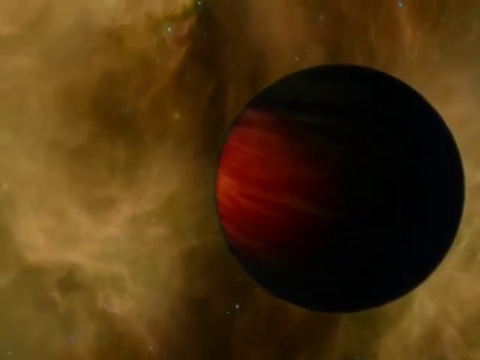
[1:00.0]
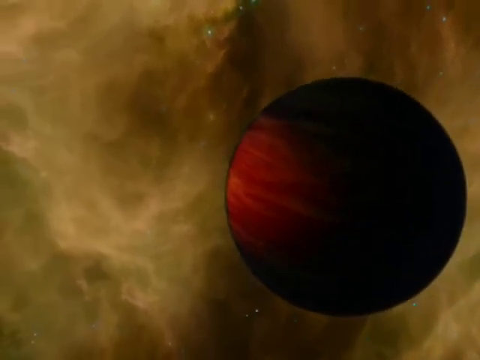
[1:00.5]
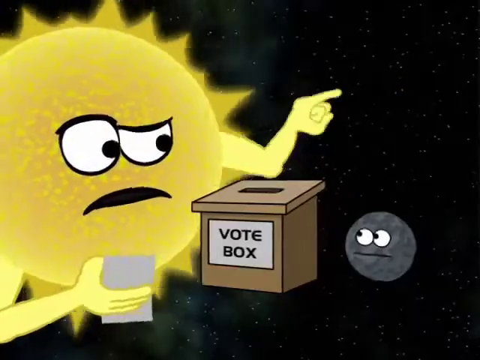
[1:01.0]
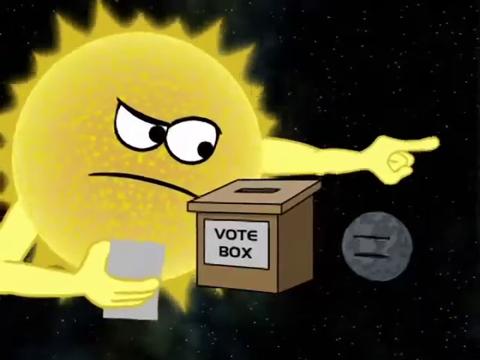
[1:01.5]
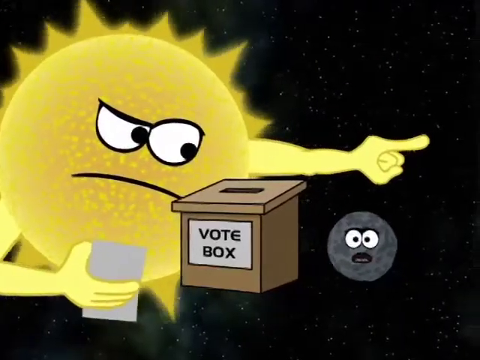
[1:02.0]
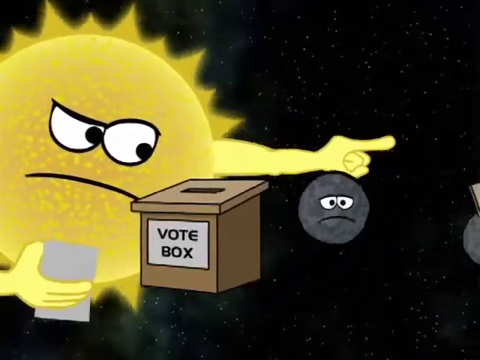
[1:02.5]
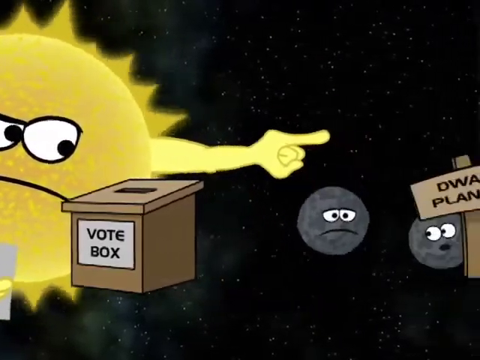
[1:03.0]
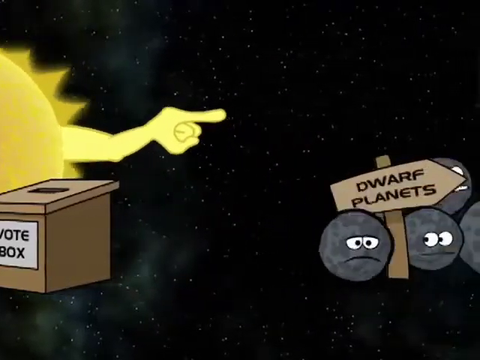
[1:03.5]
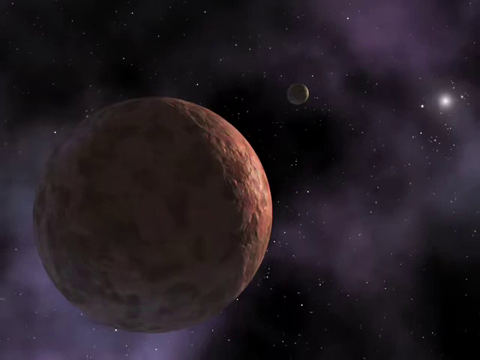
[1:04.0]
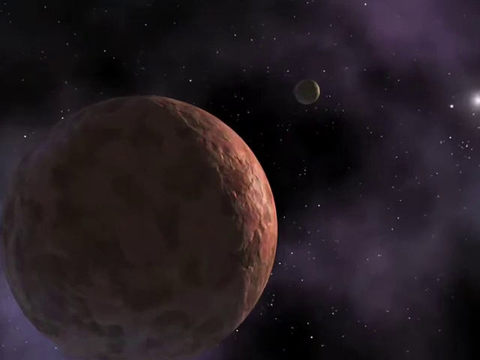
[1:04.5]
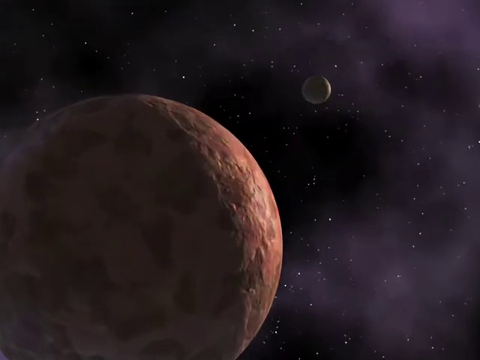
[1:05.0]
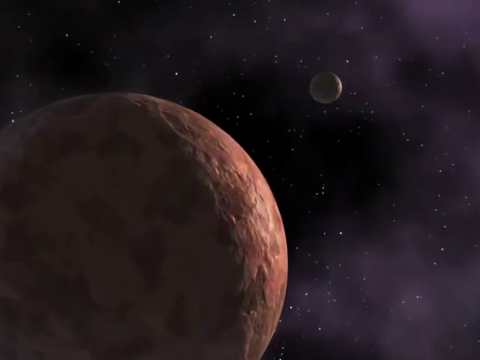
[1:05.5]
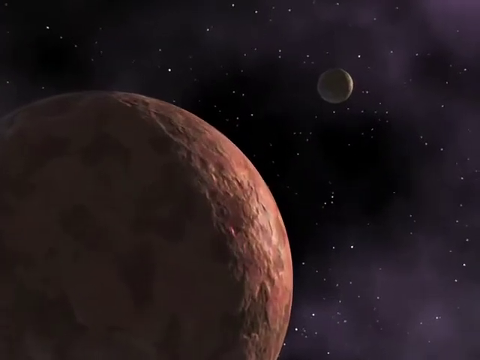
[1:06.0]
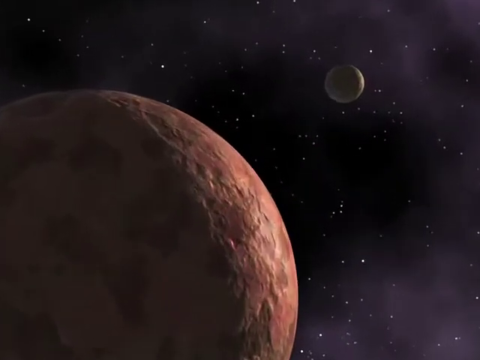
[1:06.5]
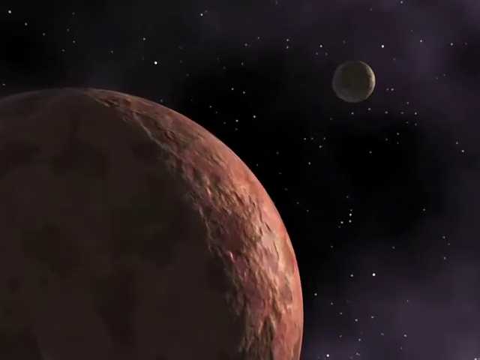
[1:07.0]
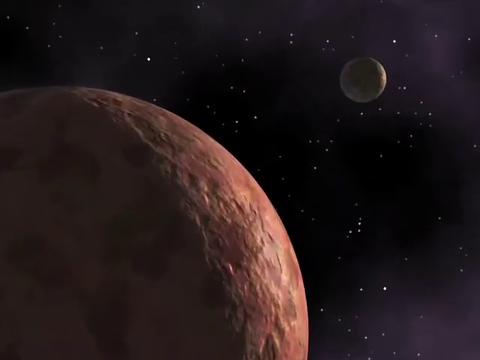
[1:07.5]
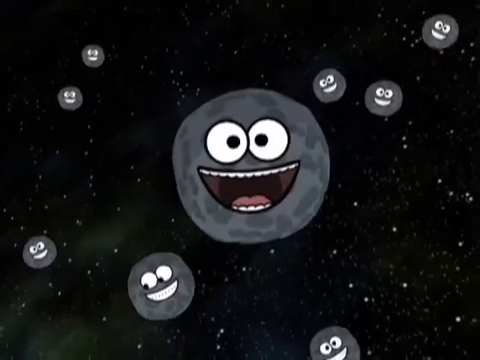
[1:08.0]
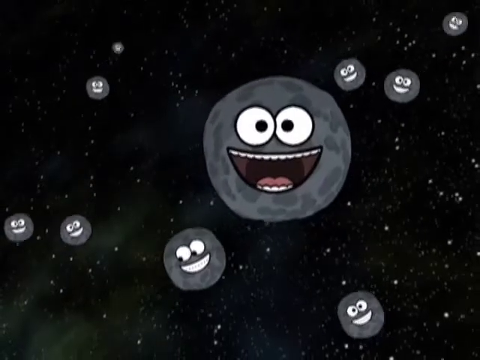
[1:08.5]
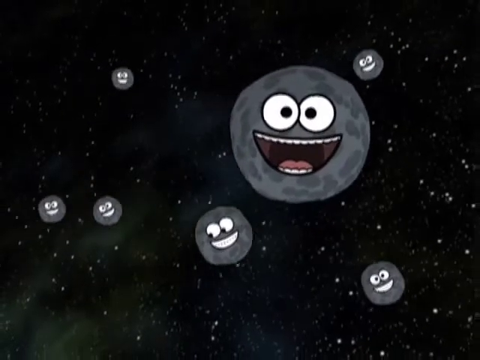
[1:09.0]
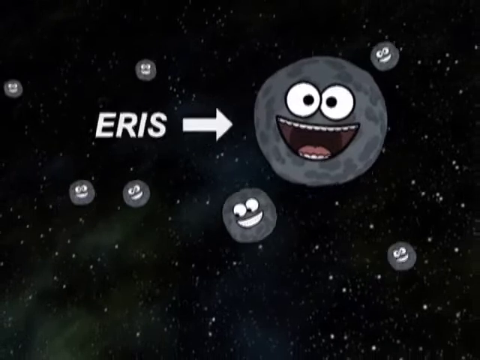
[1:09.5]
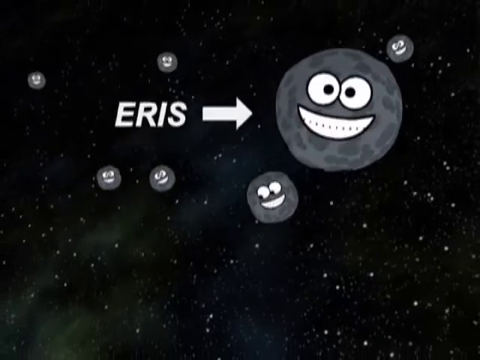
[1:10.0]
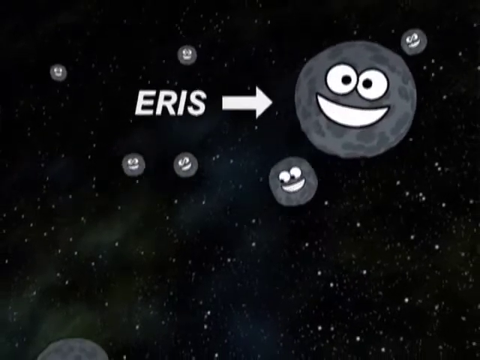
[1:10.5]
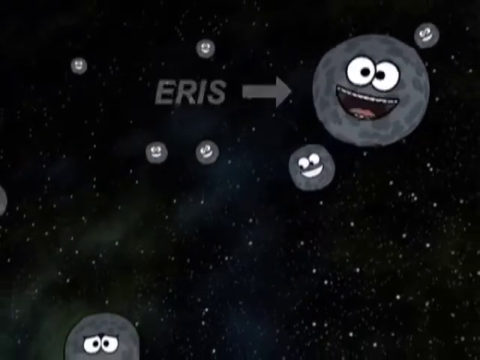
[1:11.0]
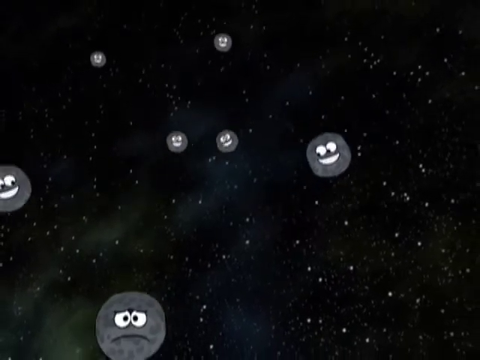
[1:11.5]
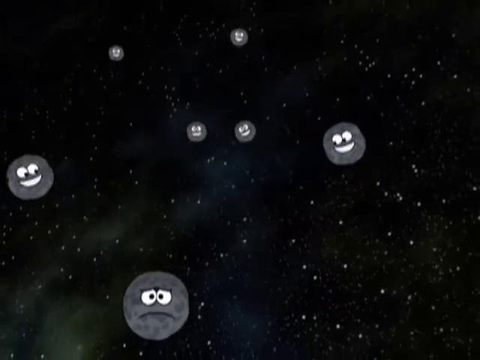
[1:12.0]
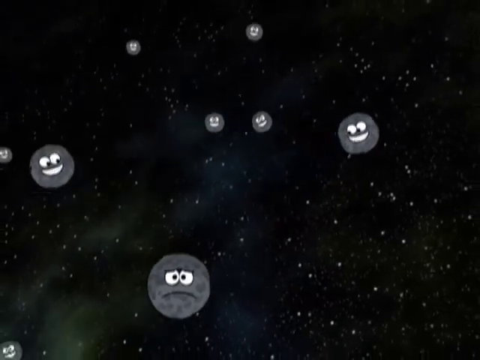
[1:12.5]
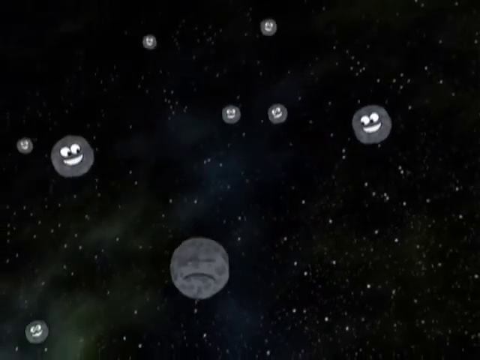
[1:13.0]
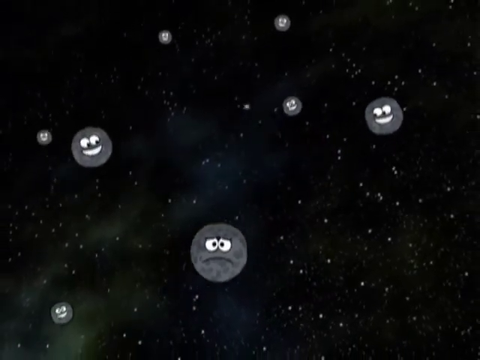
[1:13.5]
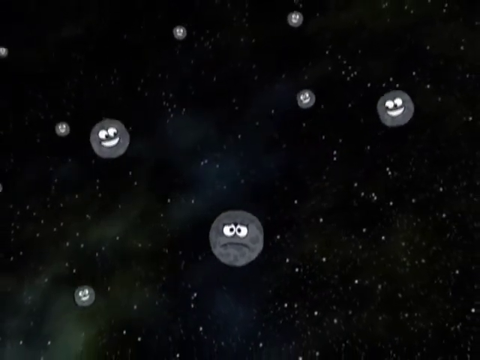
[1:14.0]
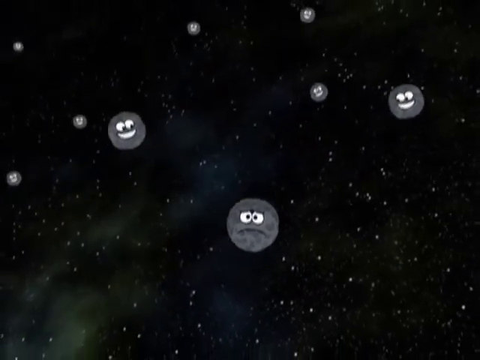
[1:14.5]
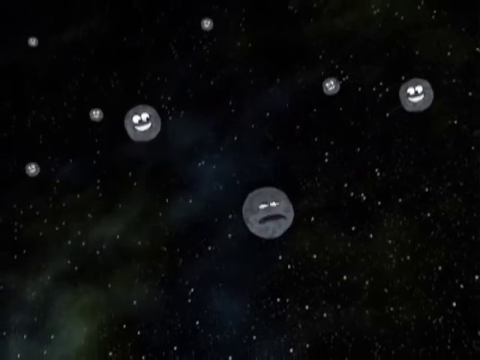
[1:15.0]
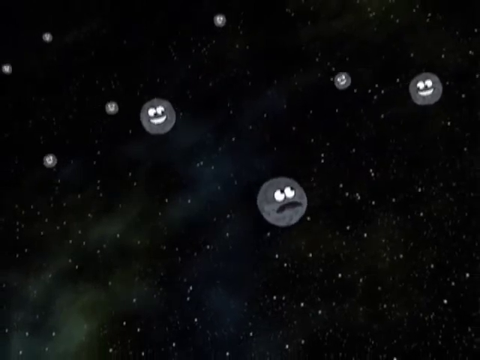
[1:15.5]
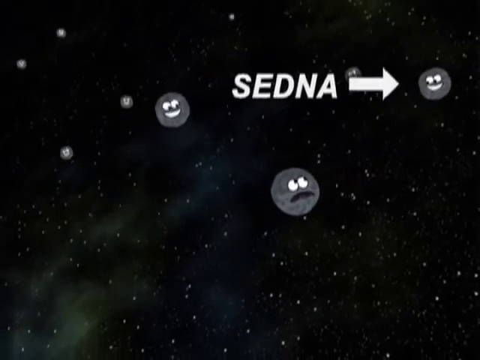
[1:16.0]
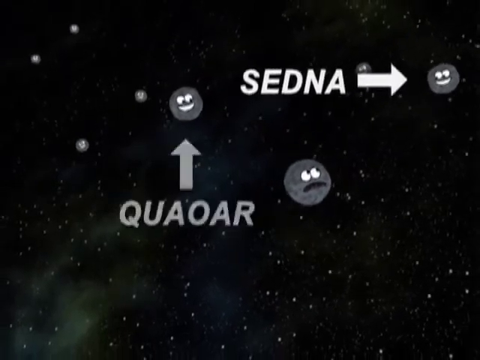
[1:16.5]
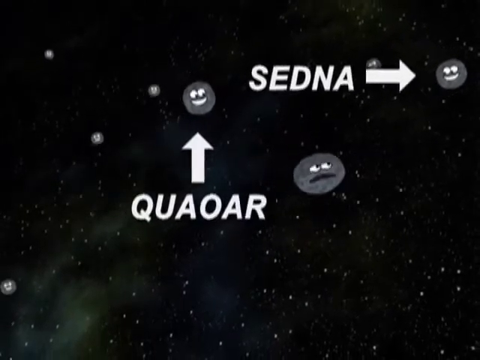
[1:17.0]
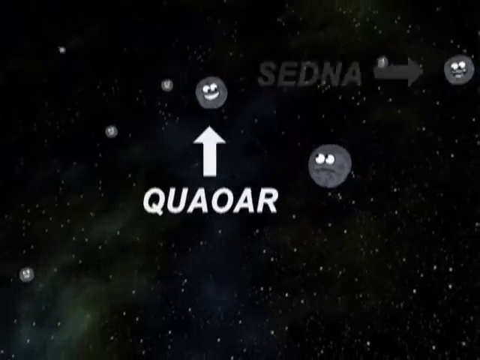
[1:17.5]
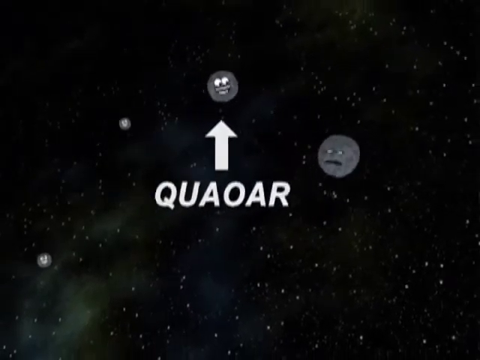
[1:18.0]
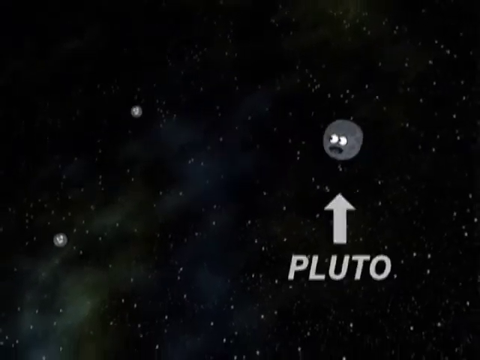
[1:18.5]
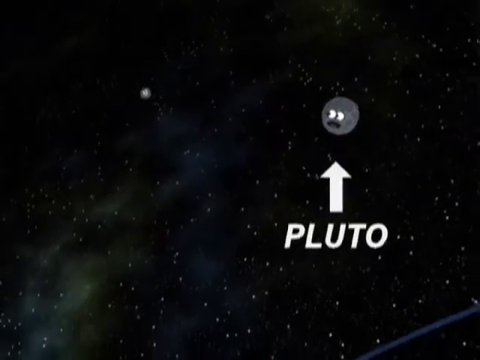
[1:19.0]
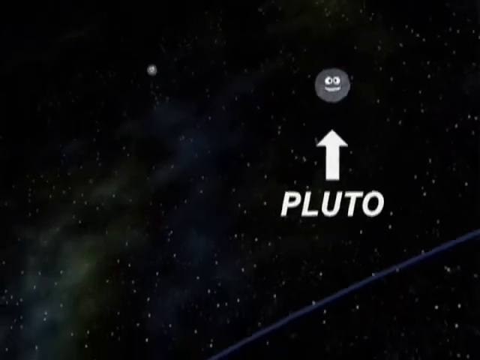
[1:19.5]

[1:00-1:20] All the planets seem to be smiling emojis.